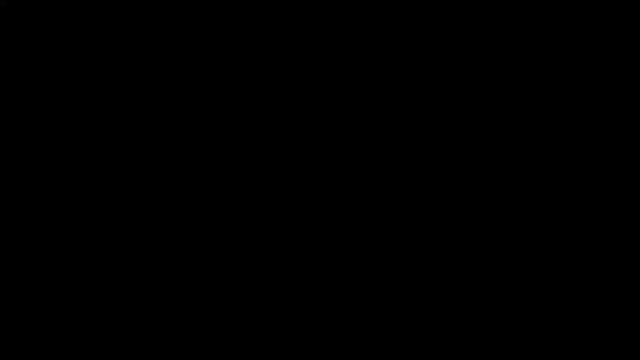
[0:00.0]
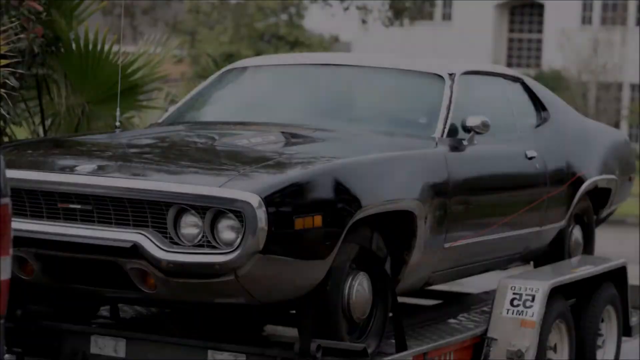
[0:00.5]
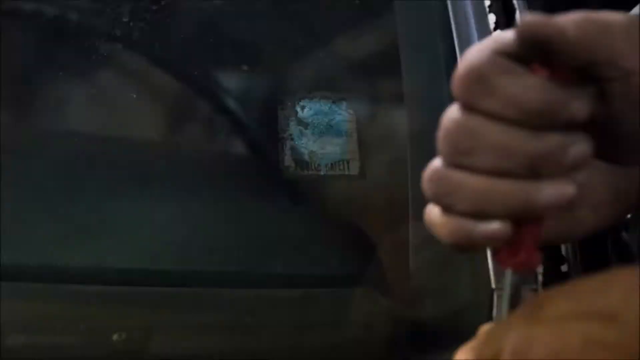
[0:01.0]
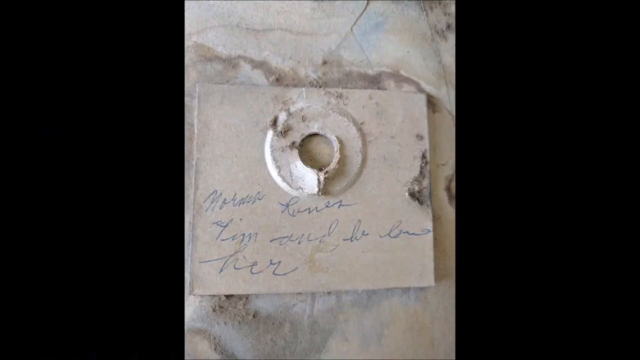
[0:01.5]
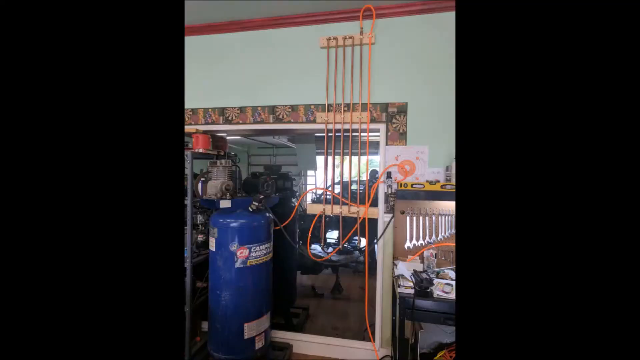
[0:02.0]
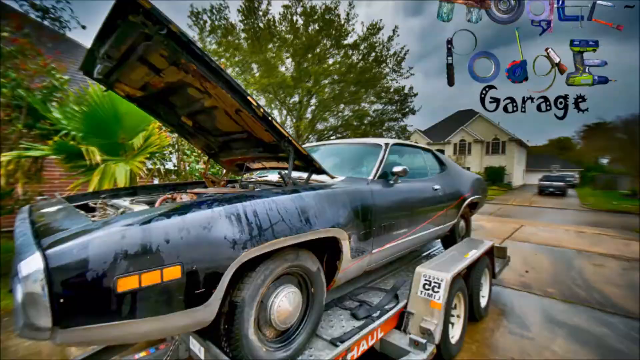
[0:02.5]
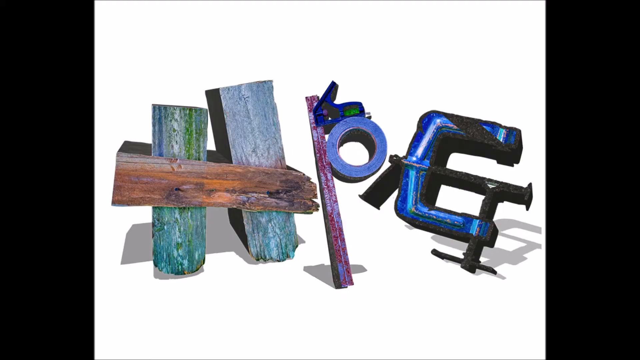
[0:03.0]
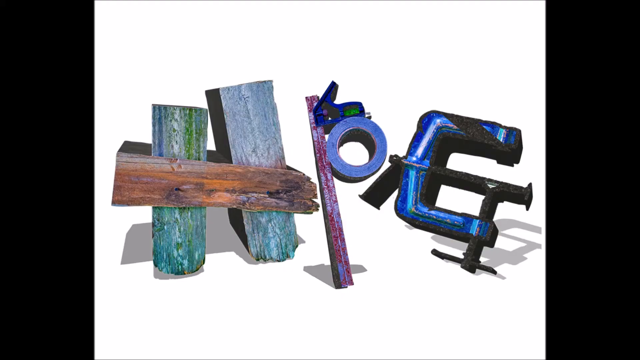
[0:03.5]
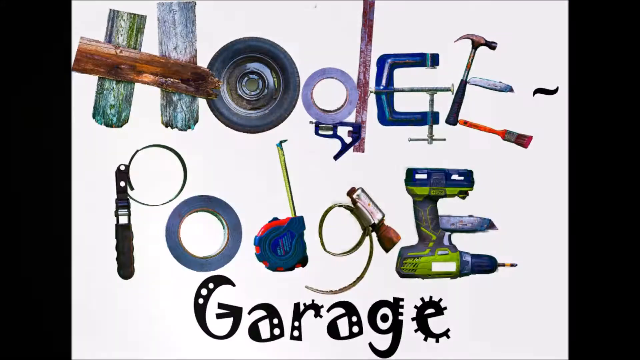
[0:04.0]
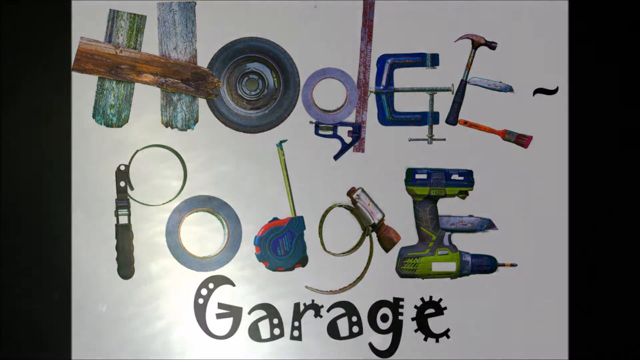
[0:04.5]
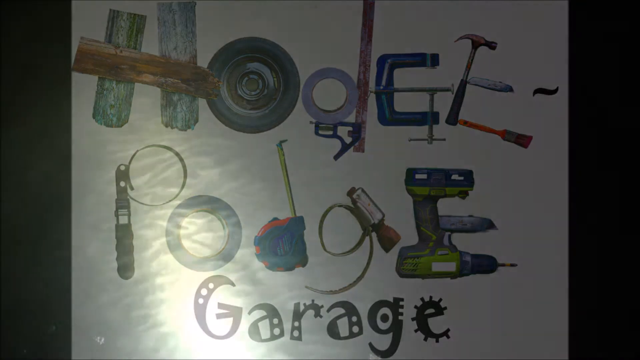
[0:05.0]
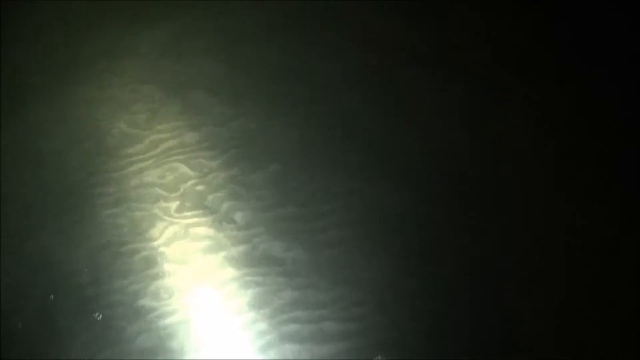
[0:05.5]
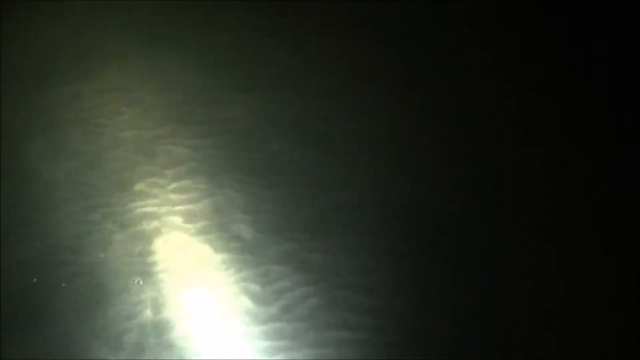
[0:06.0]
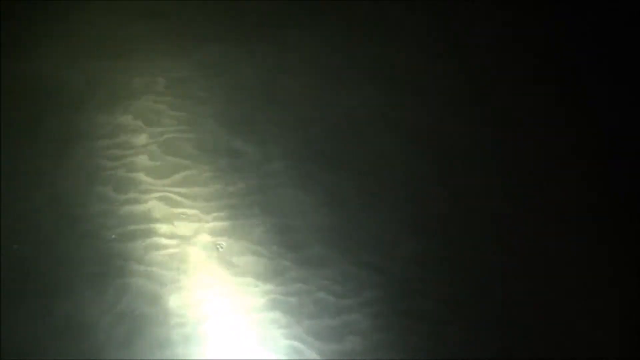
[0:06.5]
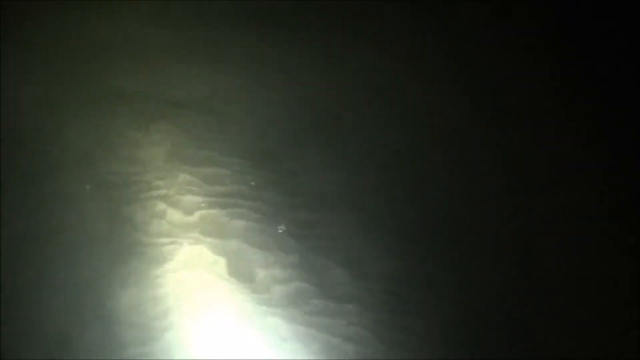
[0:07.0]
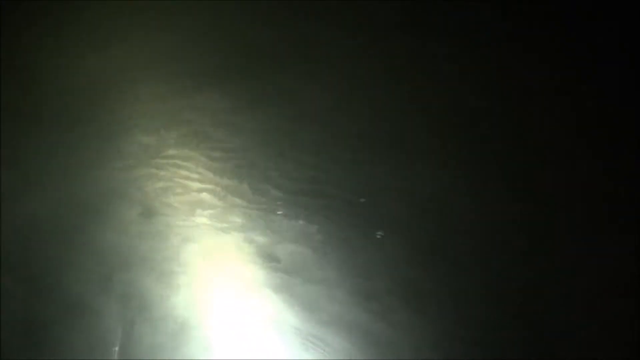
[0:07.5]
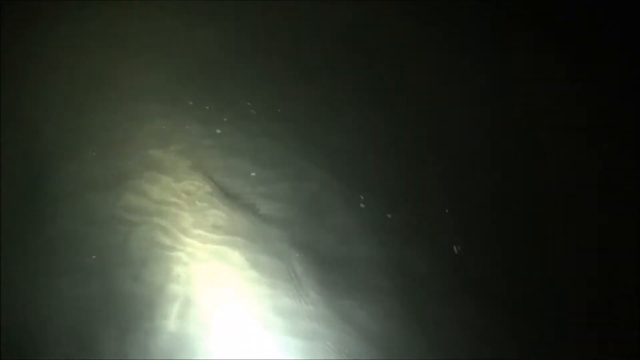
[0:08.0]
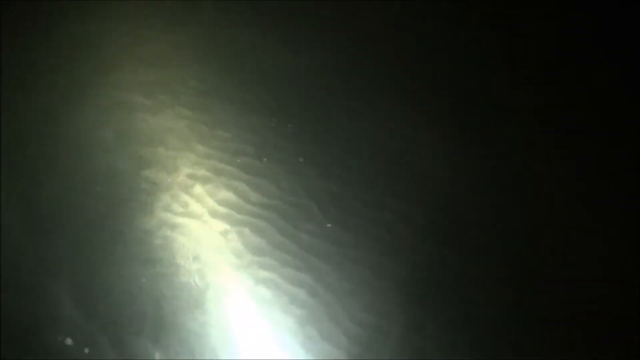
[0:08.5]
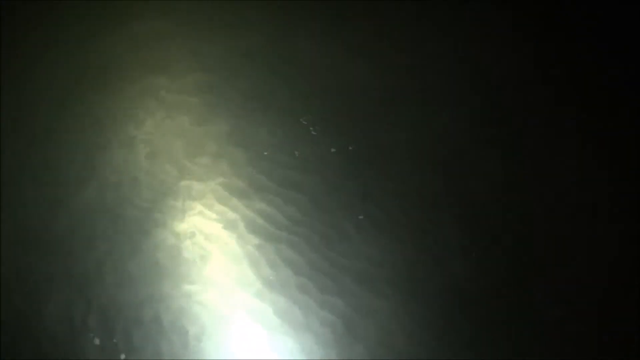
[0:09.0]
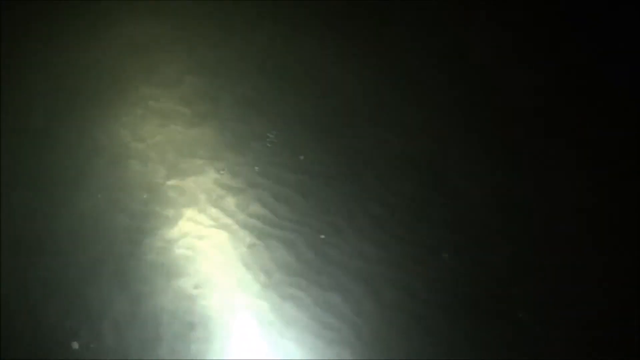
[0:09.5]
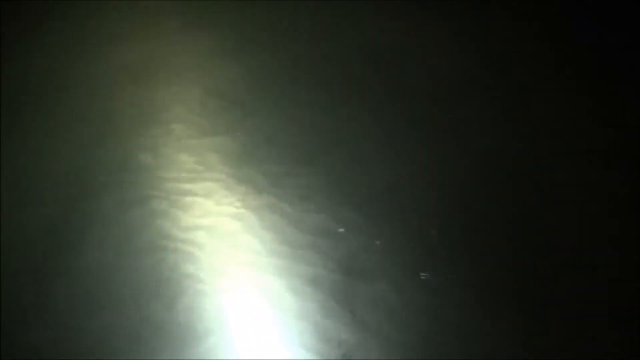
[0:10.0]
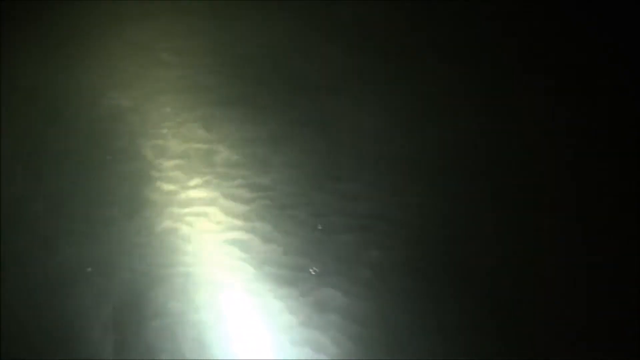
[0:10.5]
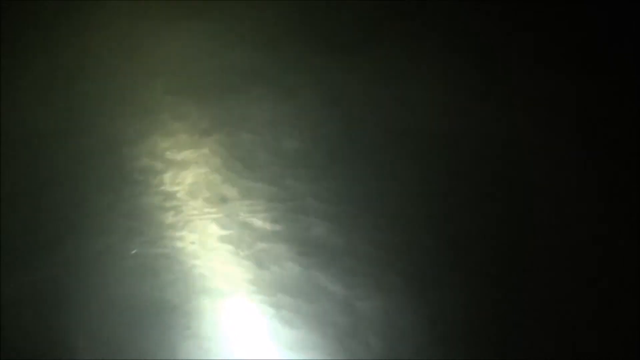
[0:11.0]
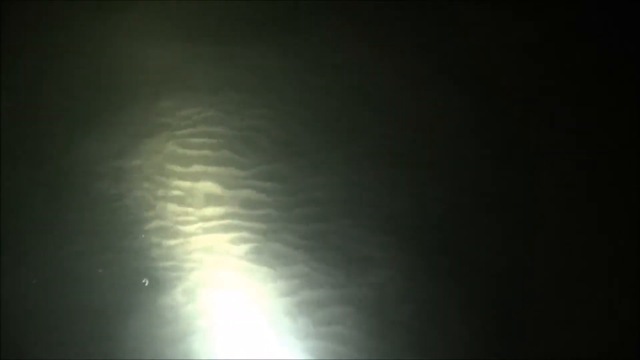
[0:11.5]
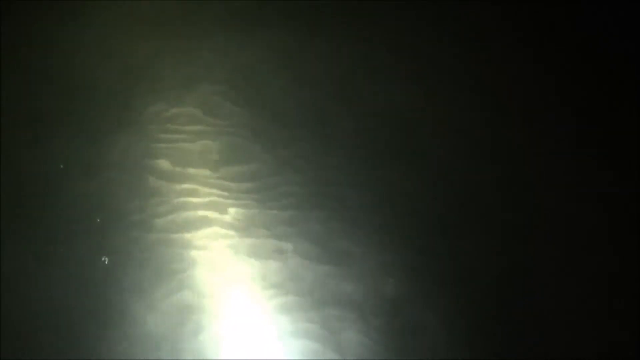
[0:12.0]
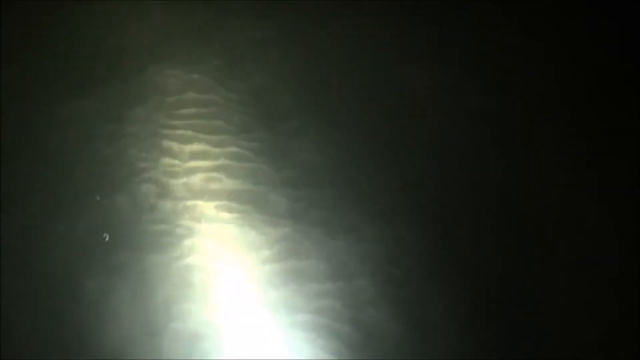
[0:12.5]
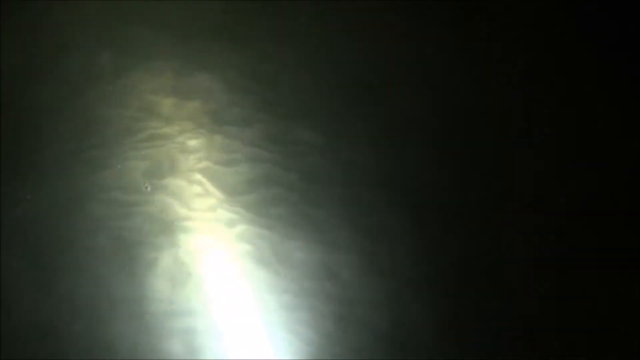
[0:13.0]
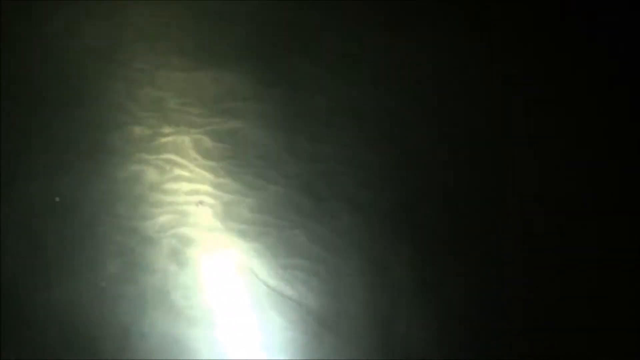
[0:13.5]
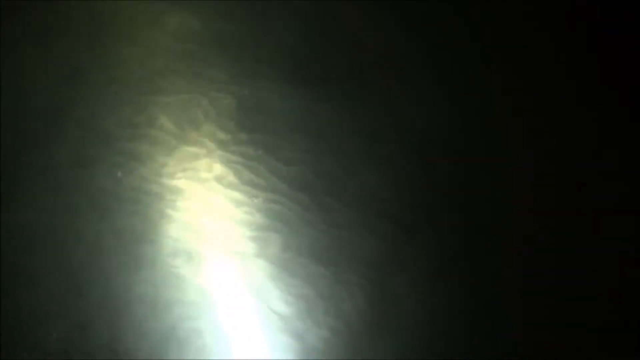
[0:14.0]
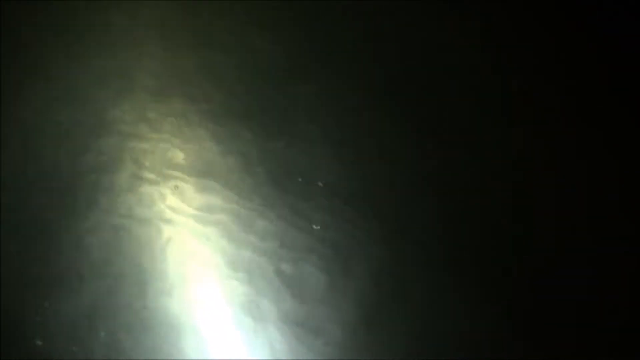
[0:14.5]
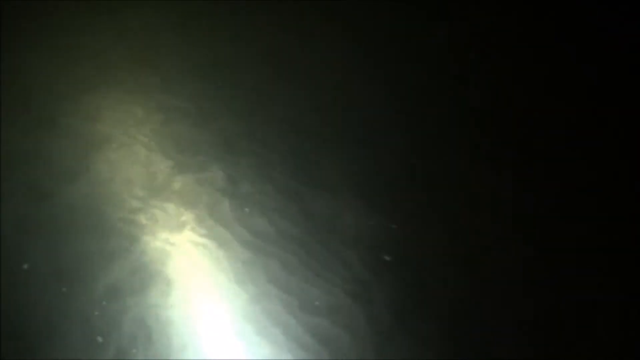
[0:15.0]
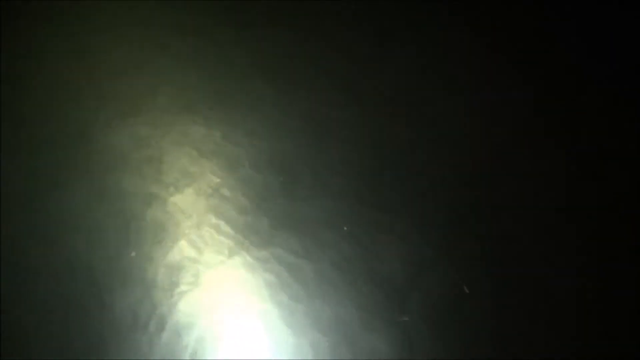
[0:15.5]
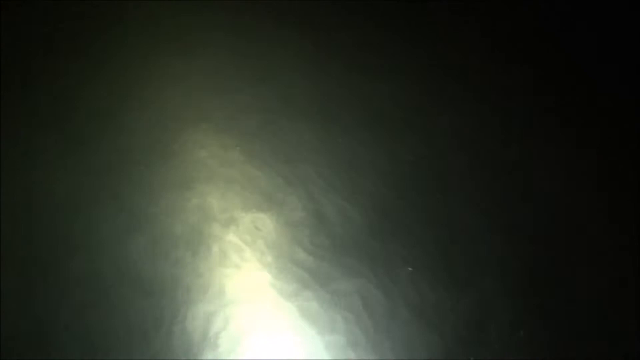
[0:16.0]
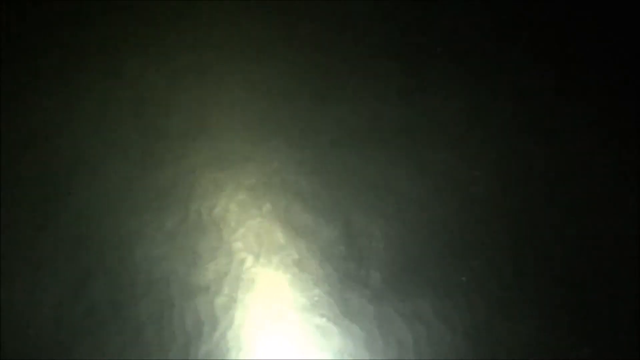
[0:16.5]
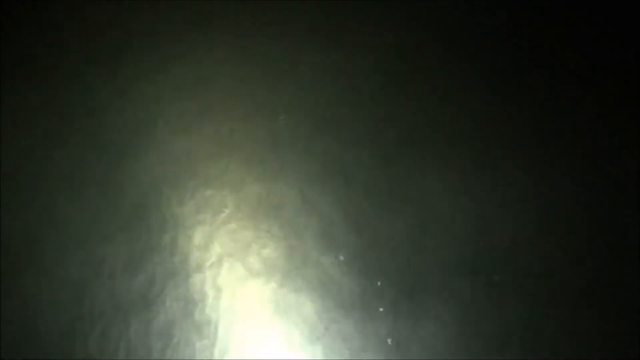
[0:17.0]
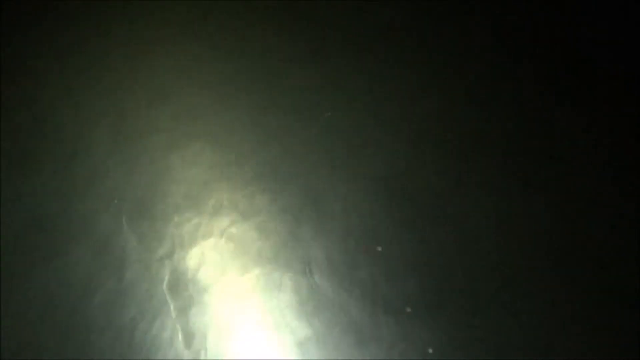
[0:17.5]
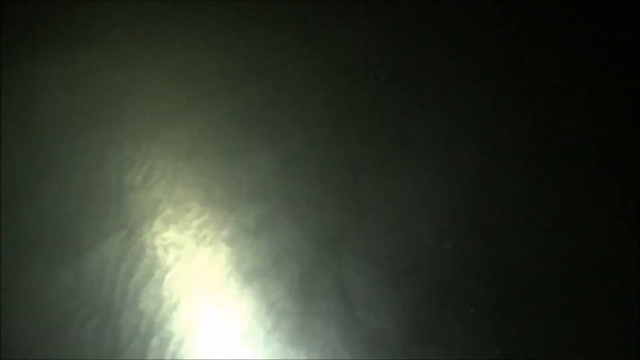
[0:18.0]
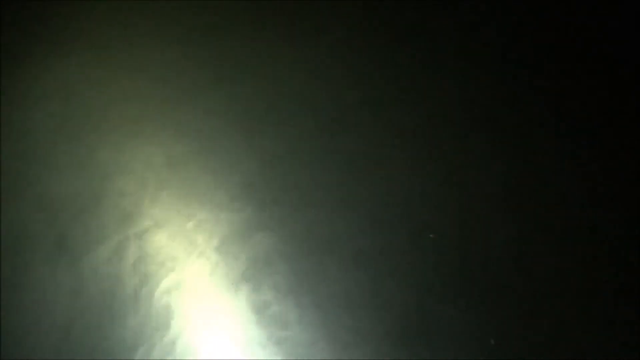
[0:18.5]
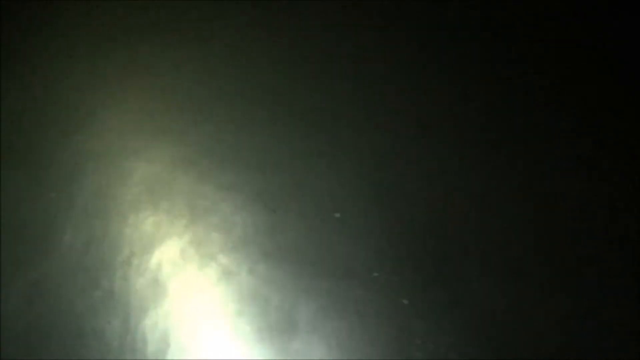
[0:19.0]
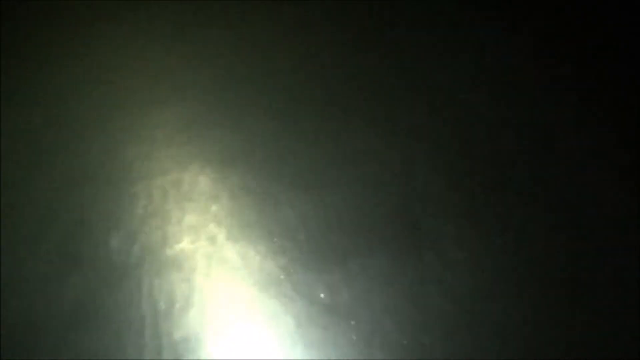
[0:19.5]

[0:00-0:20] A series of images moves very quickly, showing cars, people, and various tools being used in a garage. Text then appears, formed by several of these tools arranged as letters; it is a little difficult to read, but it seems to say "Hodet-Podge Garage." The tools are possibly for car maintenance. The video then moves on to images of water illuminated by a light in the dark, showing only the movement of the water.